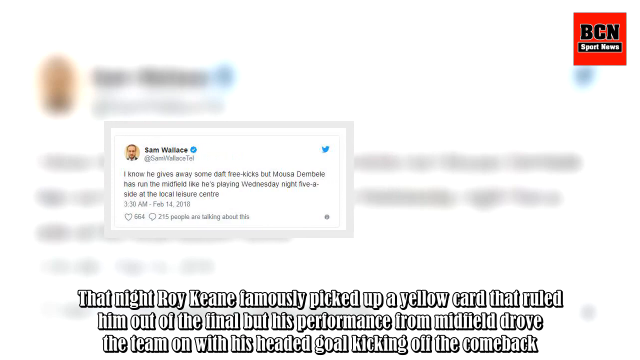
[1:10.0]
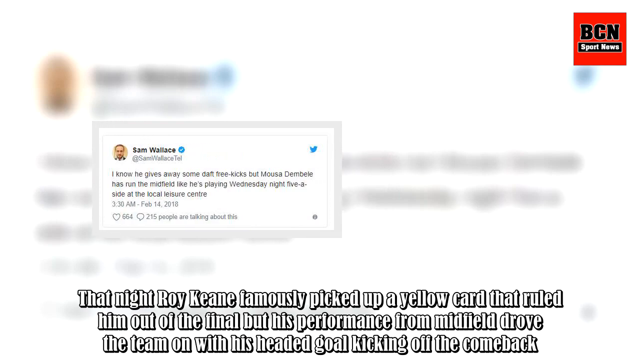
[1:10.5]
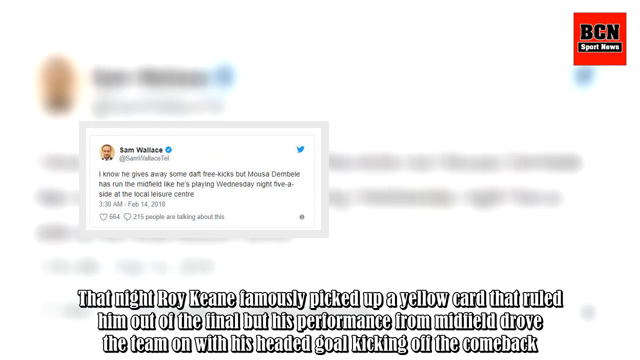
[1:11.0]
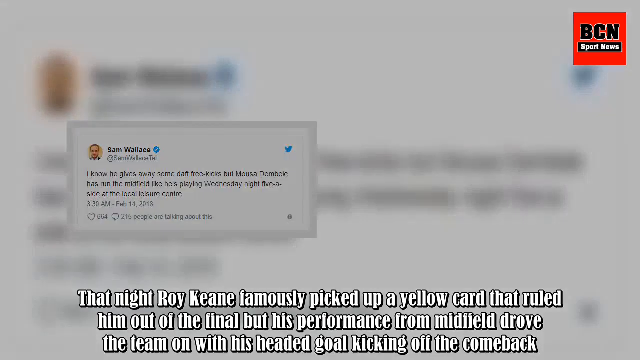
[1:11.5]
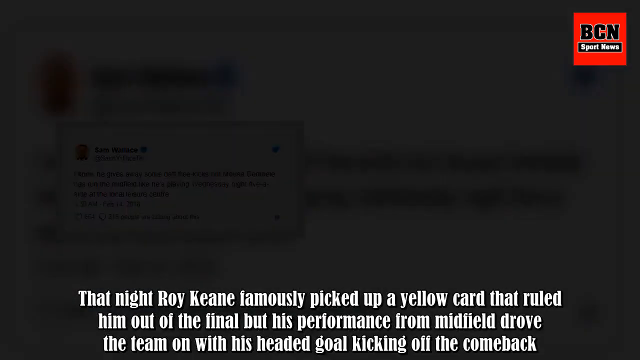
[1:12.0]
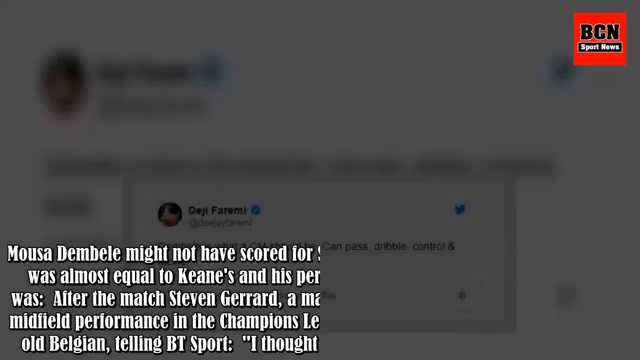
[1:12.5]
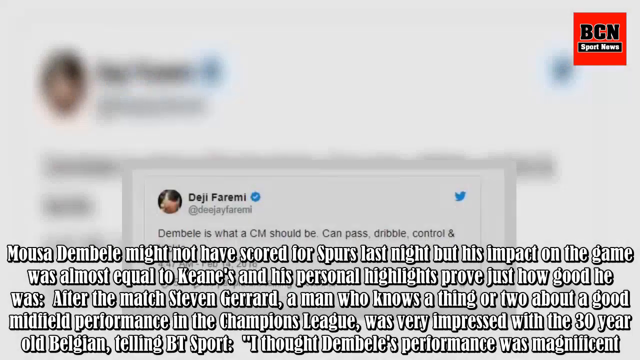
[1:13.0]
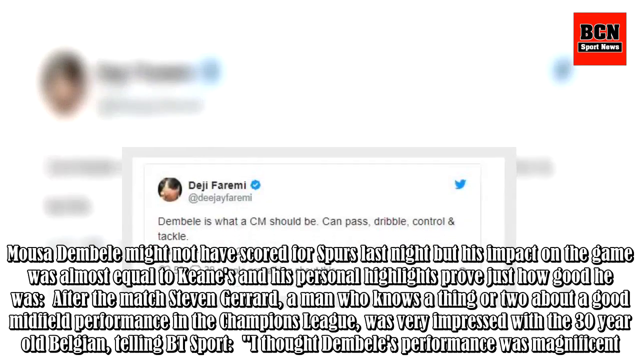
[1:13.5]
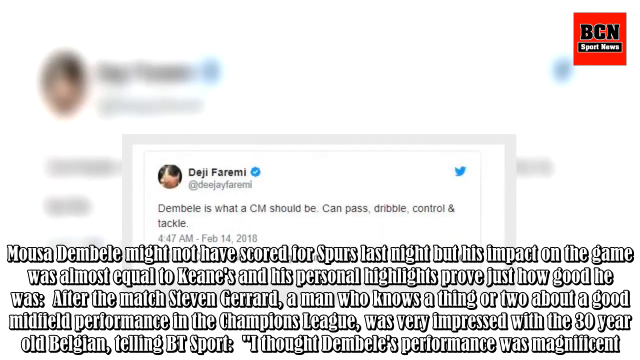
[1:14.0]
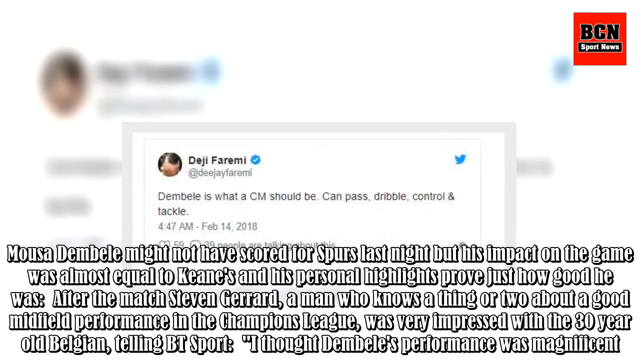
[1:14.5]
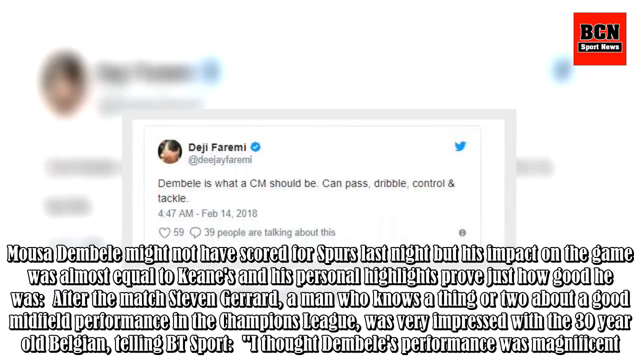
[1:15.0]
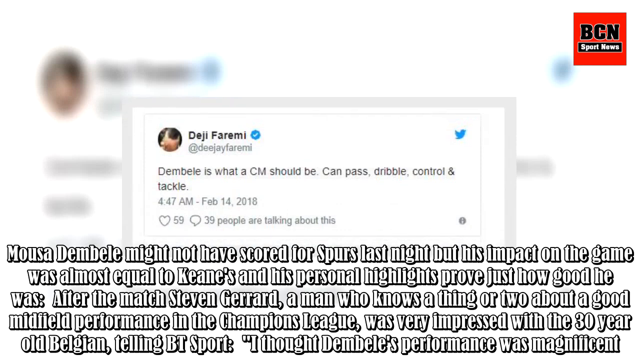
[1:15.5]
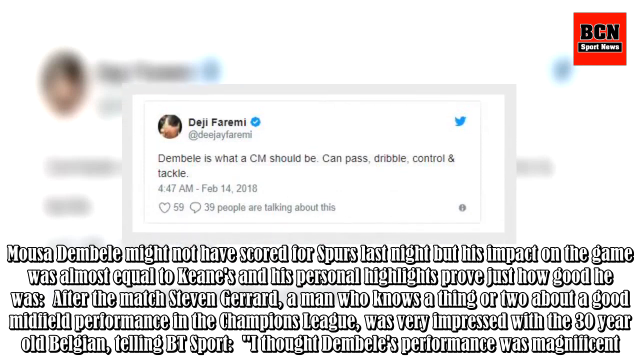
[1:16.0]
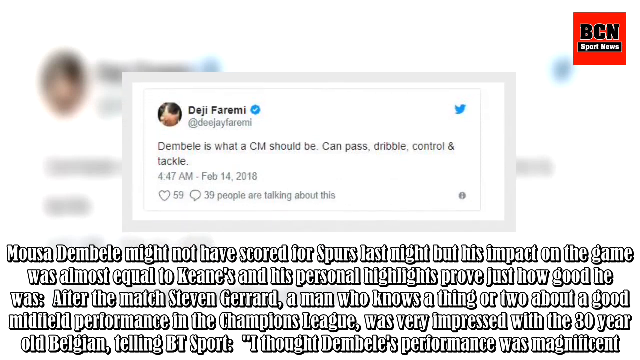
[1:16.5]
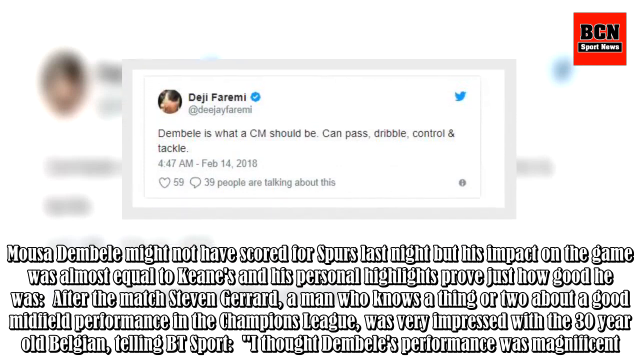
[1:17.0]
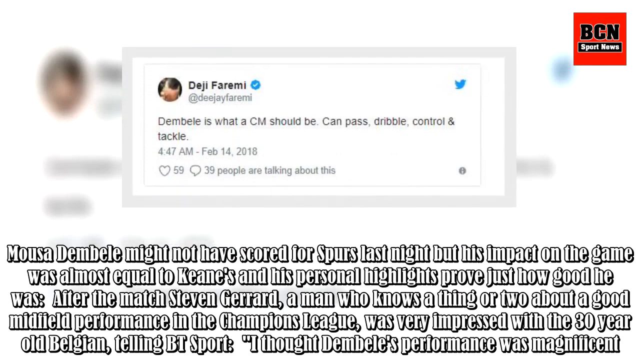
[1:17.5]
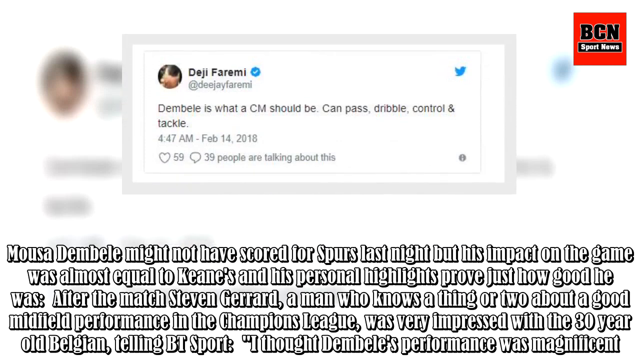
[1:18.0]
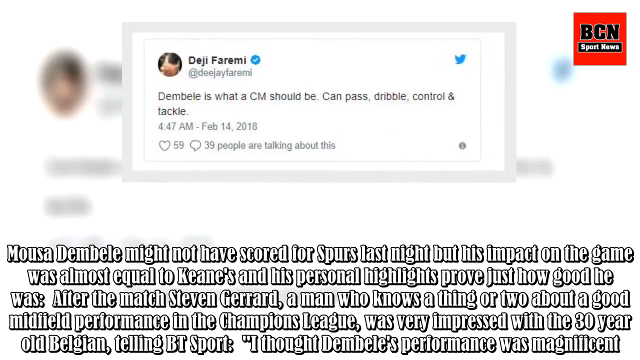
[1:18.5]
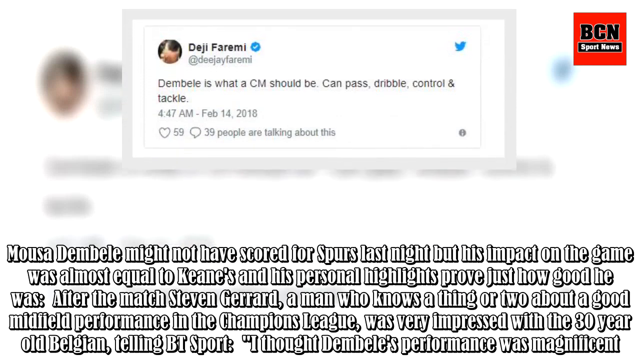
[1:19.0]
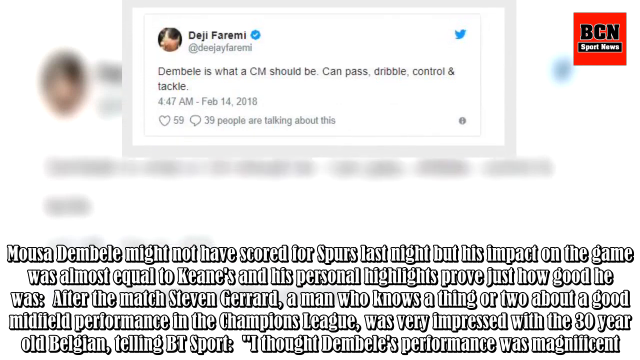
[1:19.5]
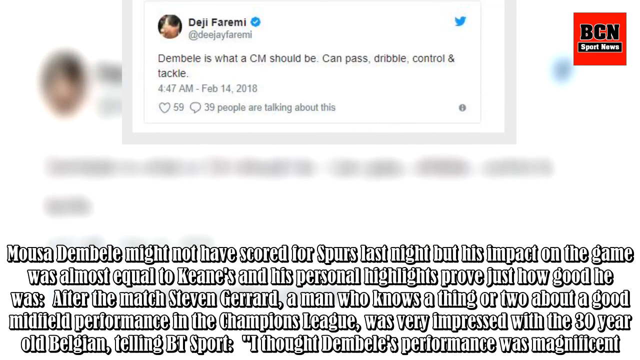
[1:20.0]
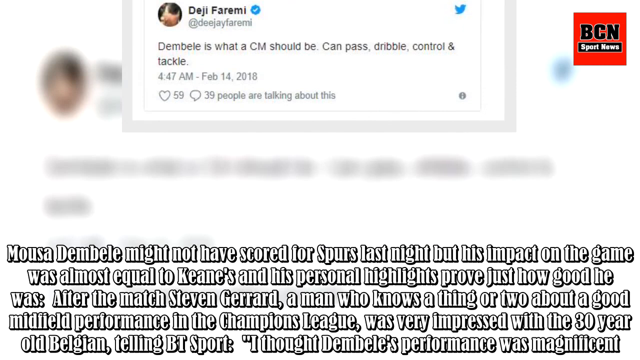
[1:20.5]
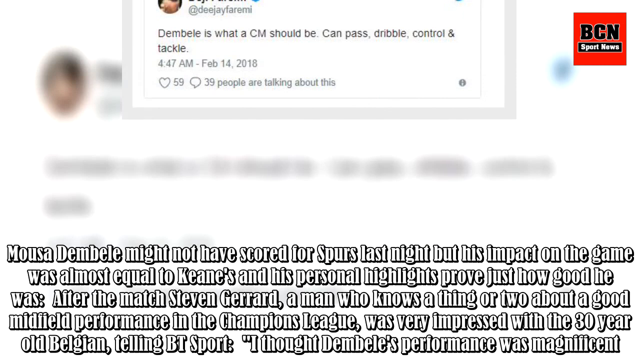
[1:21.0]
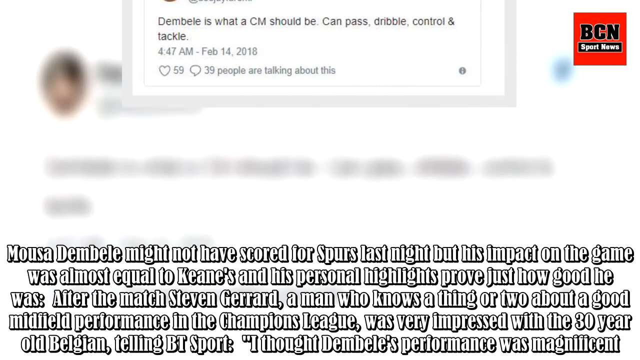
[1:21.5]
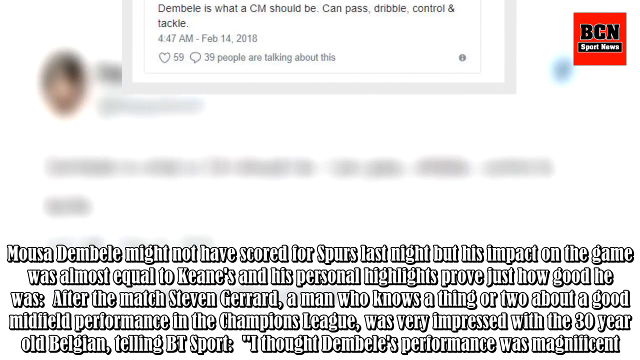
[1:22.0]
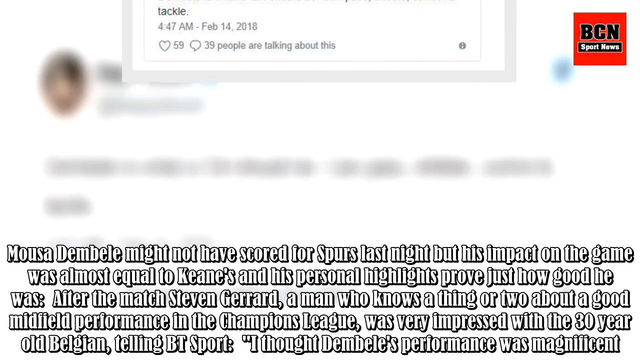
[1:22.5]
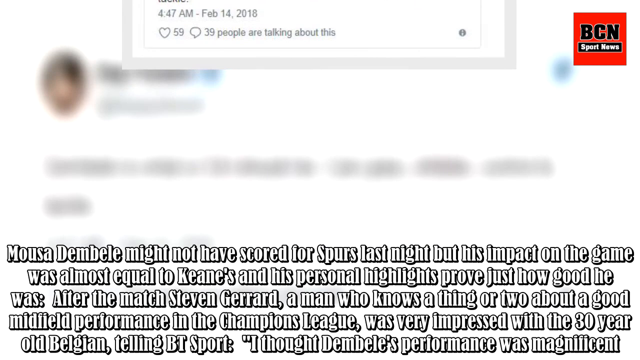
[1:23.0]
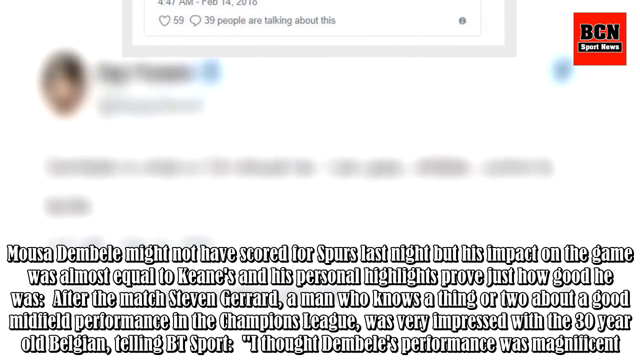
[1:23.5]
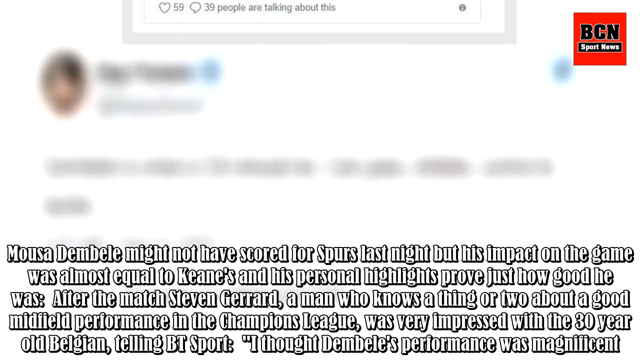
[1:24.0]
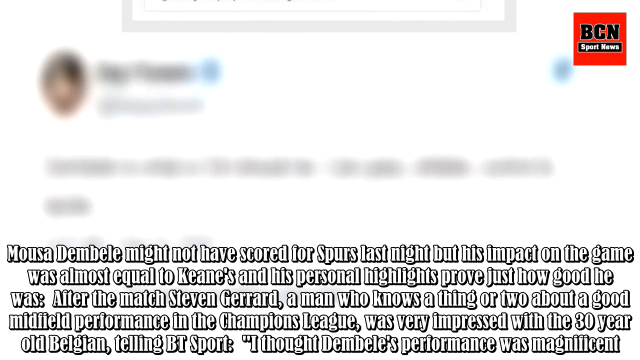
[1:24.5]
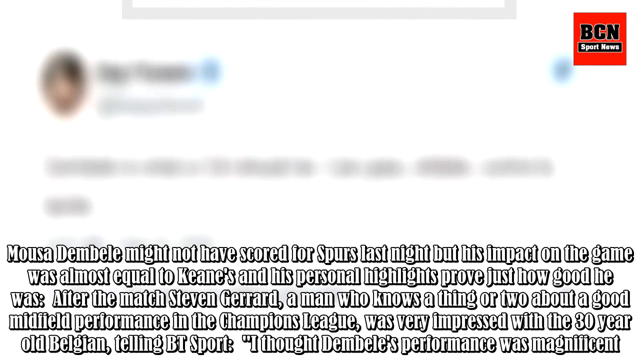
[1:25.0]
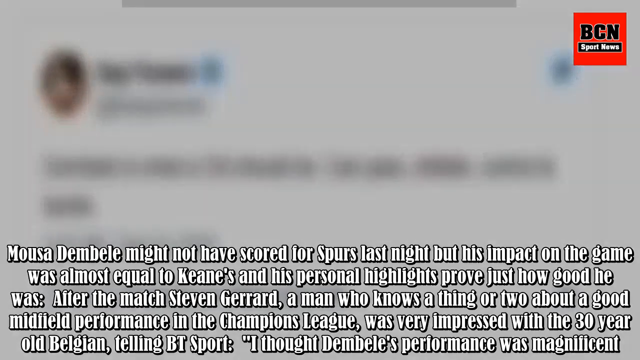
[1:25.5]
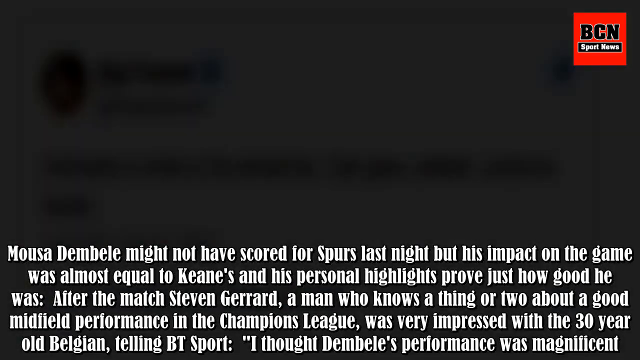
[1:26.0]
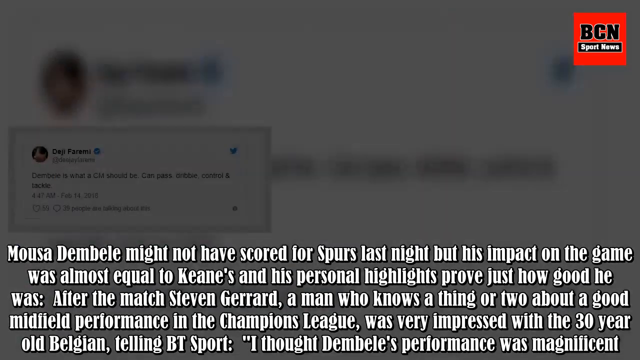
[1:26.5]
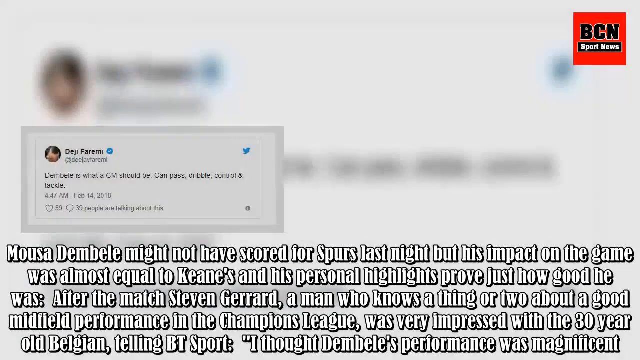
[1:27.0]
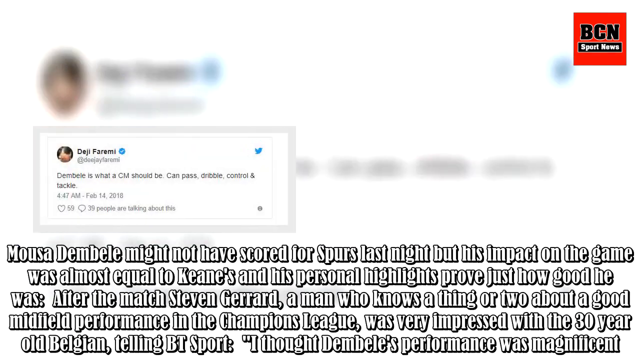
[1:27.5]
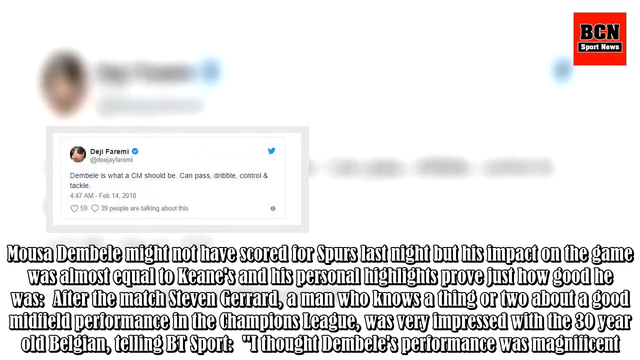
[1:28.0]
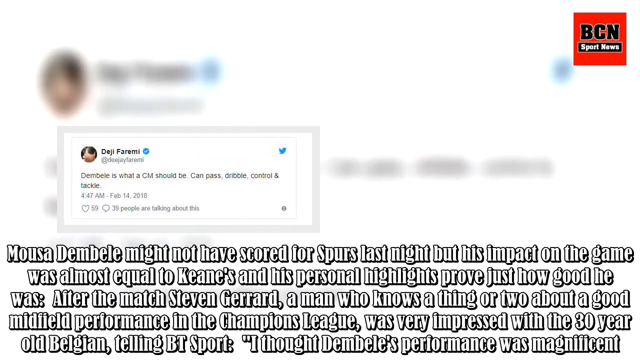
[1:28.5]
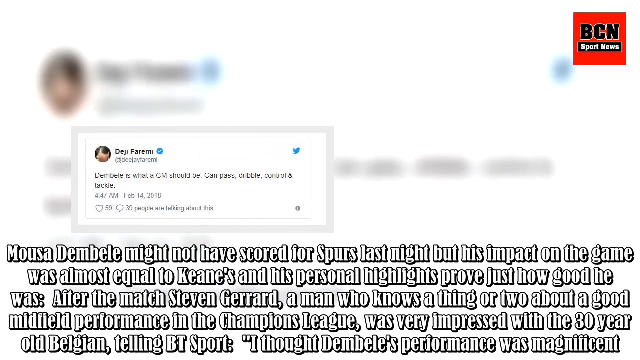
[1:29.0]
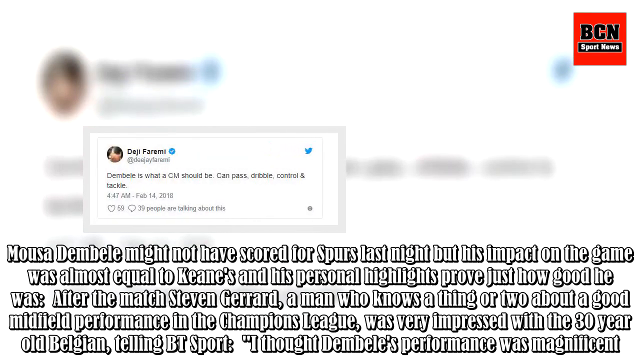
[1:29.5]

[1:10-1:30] Sam Wallace's comment about Dembele is on screen, and text at the bottom describes Roy Keane famously picking up a yellow card that ruled him out of the final, while his performance from midfield drove the team on with his headed goal kicking off the comeback. The screen goes blank, then a 2018 post from DG Farami appears: "he's what a CM should be. Can pass, dribble, control, and tackle." Below it, text reads "Moussa Dembele might not have scored for Spurs last night, but his impact on the game was almost equal to Keane's. And his personal highlights proved just how good he was. After the match, Steven Gerrard, a man who knows a thing or two about good midfield performance in the Champions League, was very impressed with the 30-year-old Belgian telling BT Sport, I thought Dembele's performance was magnificent."